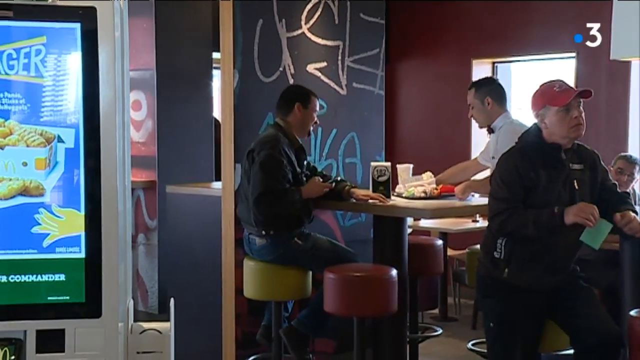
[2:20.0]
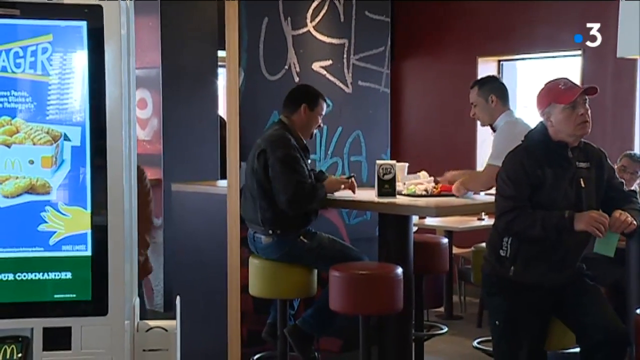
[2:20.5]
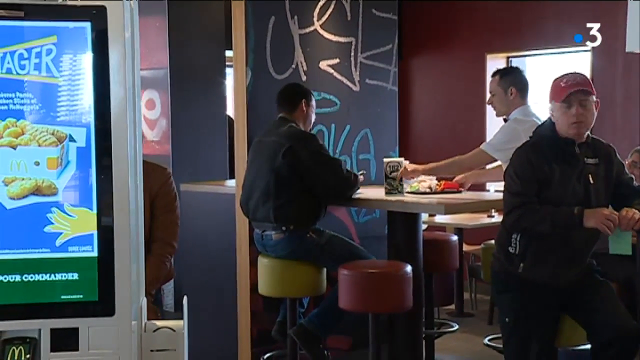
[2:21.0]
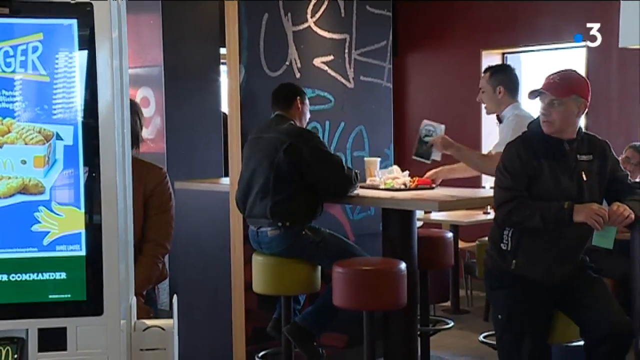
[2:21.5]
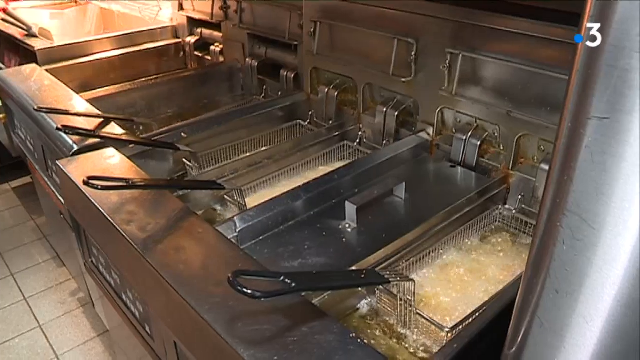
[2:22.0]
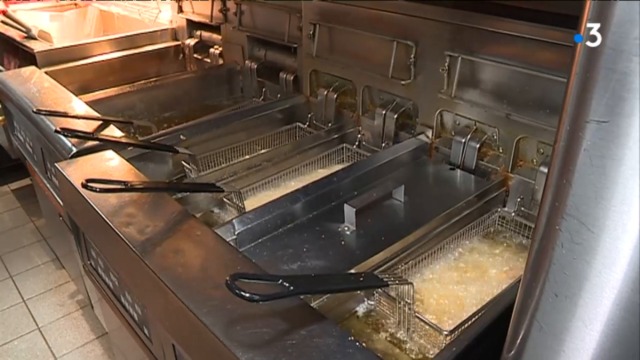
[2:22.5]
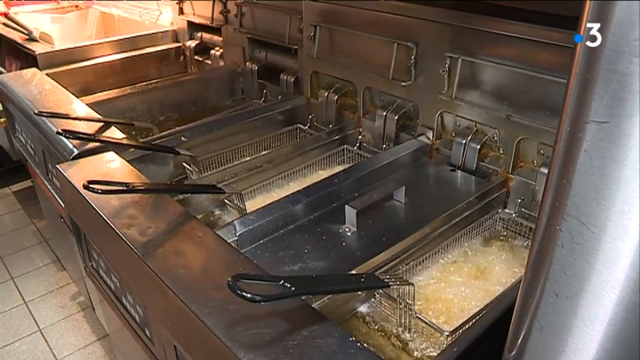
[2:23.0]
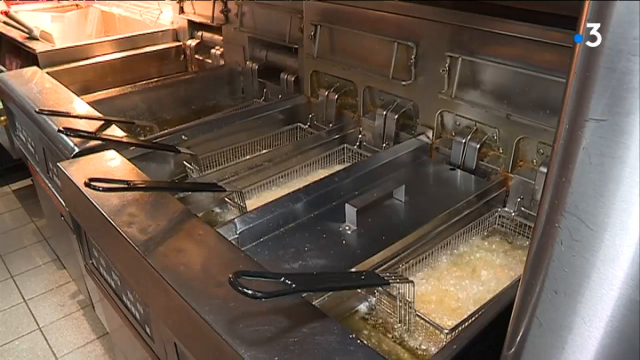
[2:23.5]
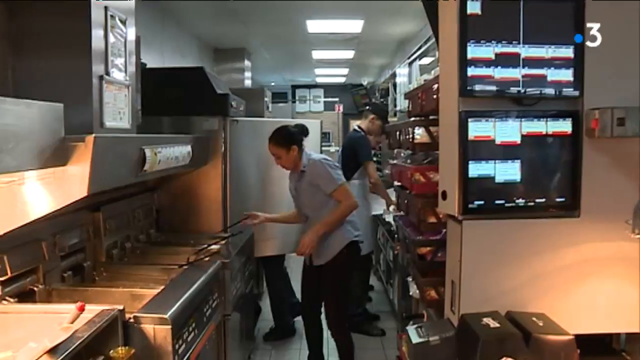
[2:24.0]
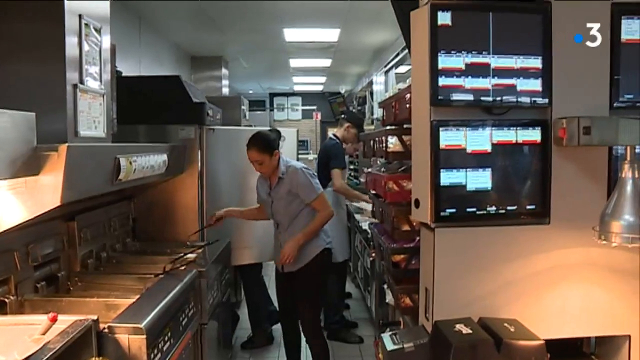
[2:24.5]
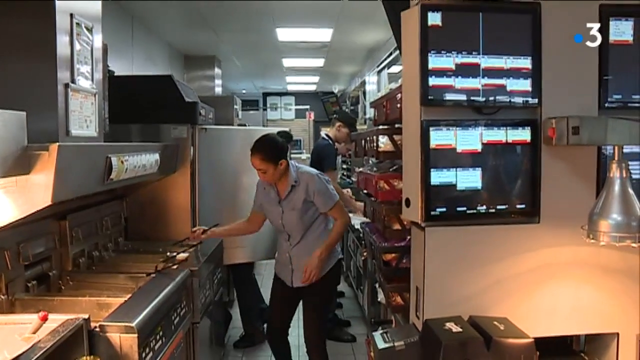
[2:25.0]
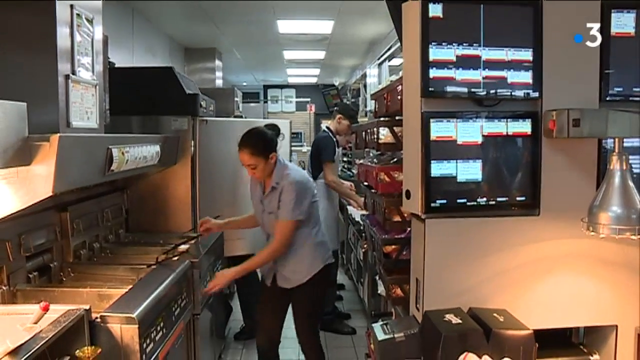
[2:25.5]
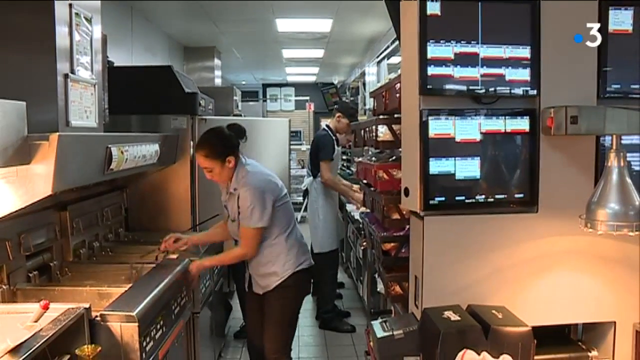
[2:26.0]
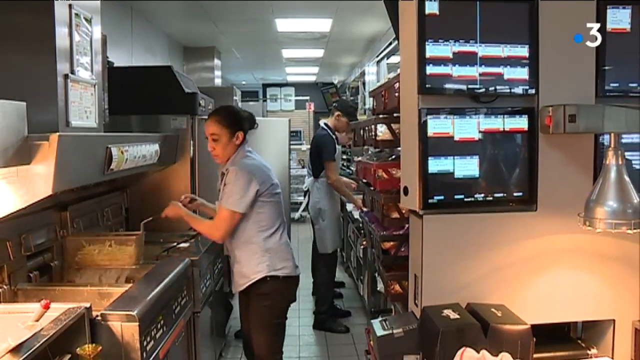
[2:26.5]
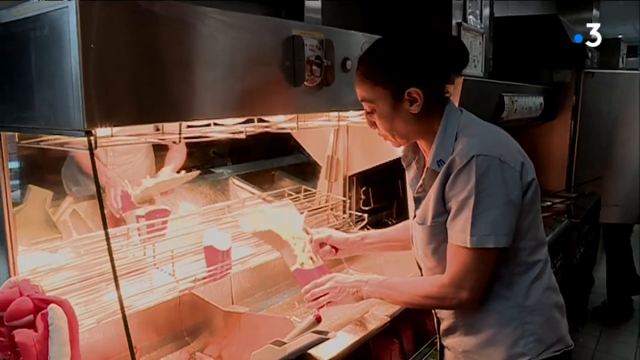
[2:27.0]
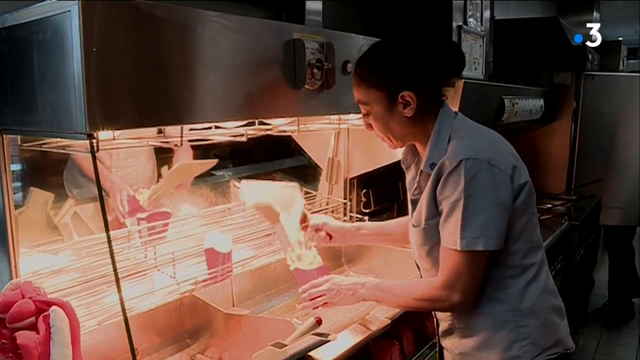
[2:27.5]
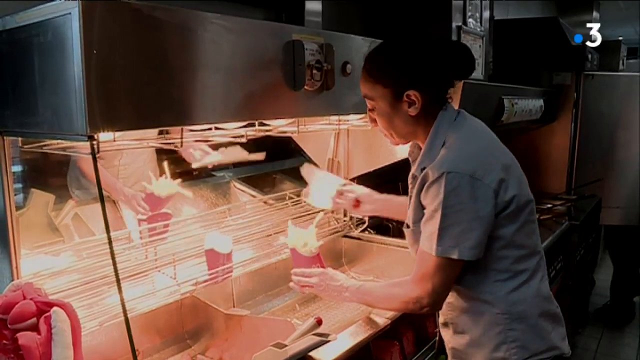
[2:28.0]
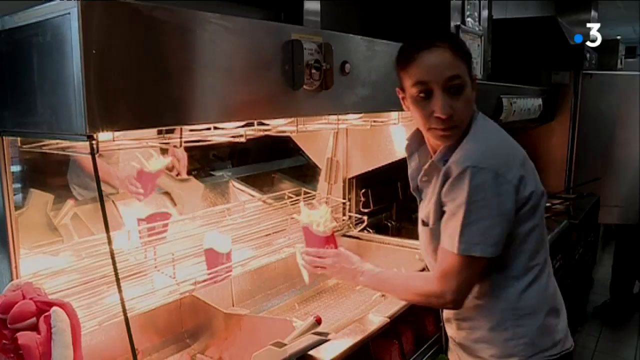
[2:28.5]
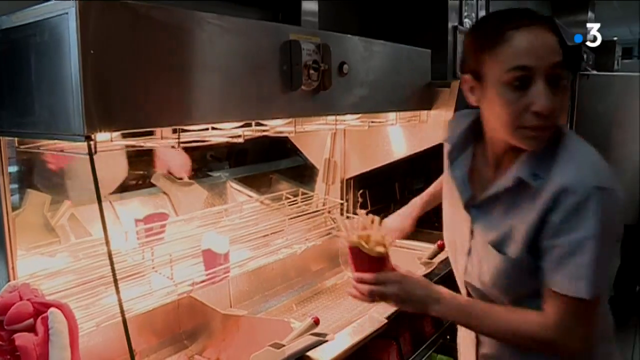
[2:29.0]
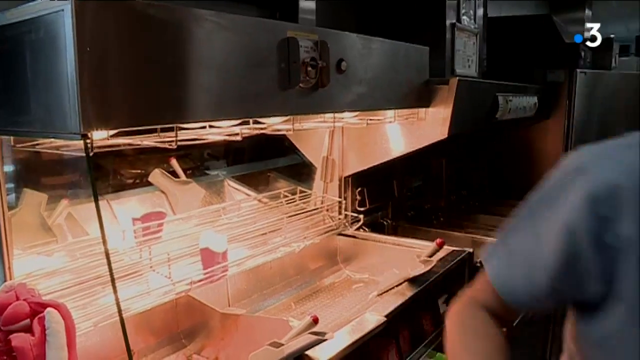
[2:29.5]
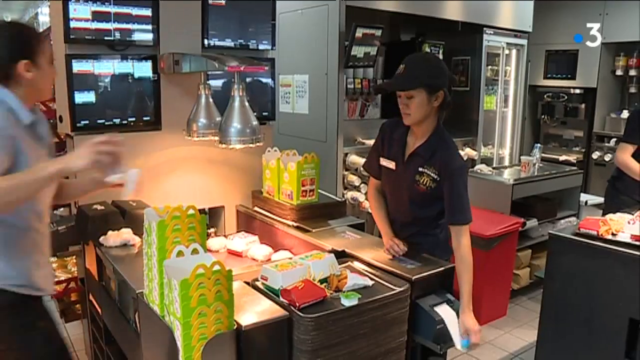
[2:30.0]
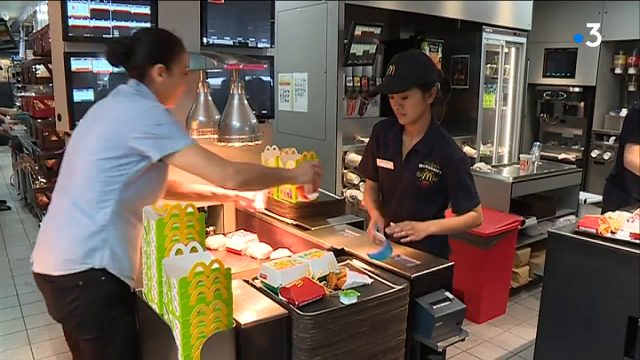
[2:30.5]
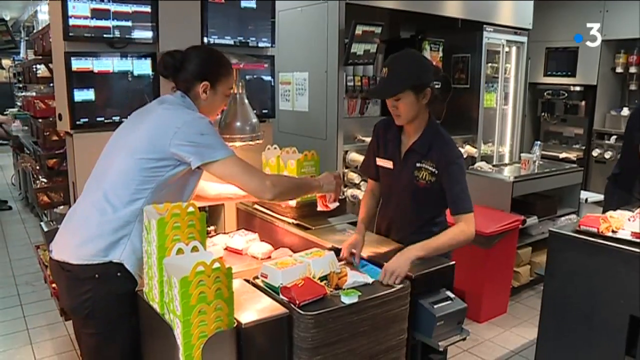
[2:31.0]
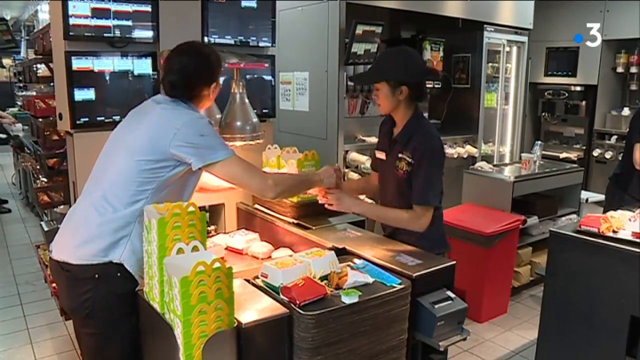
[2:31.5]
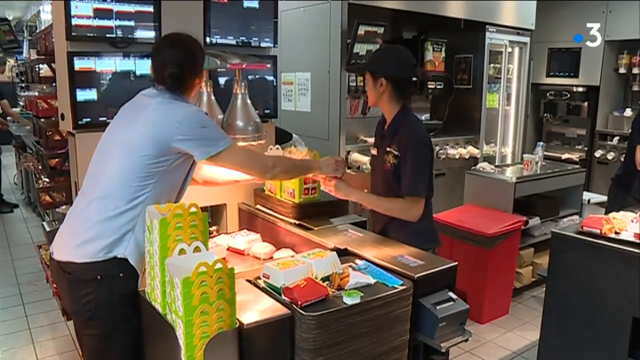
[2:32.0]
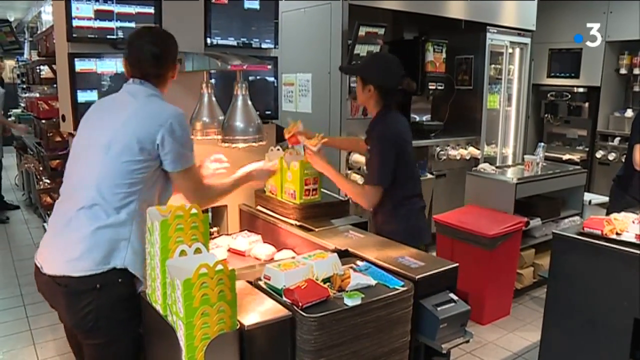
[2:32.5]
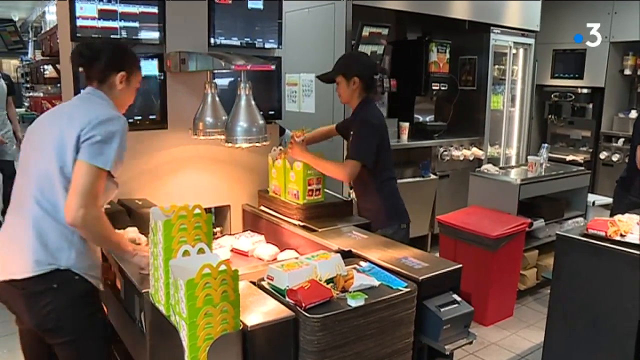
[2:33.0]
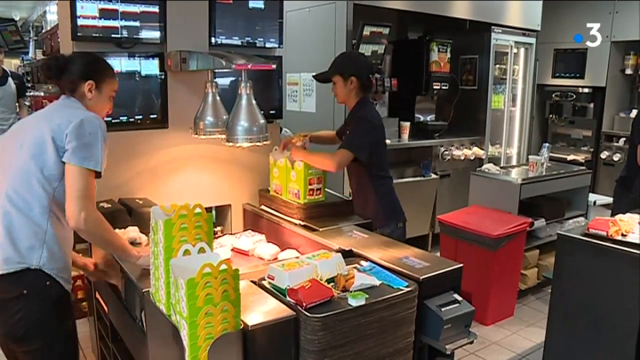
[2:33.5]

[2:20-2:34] French fries are deep fried in baskets in a McDonald's restaurant's deep fryer. There are four baskets: three are in fryers and one looks like it might be being cleaned. A woman picks up one of the baskets, then puts fries in a box and hands them to another worker standing by a tray of food. She places the fries into what look like Happy Meal boxes, and appears to be preparing to deliver a tray of food to a customer.